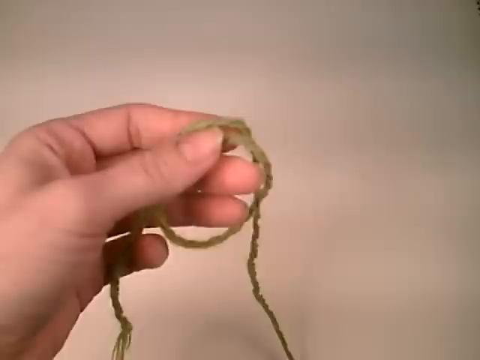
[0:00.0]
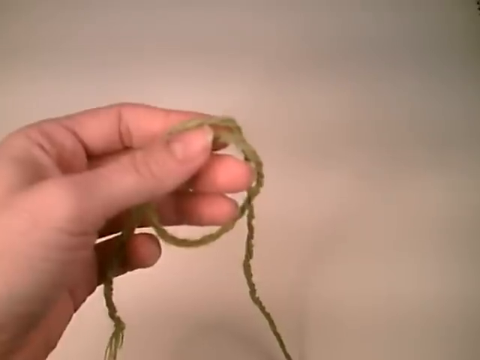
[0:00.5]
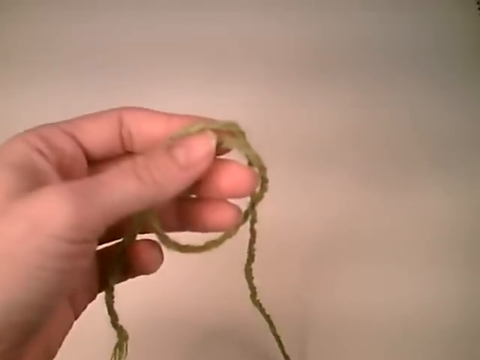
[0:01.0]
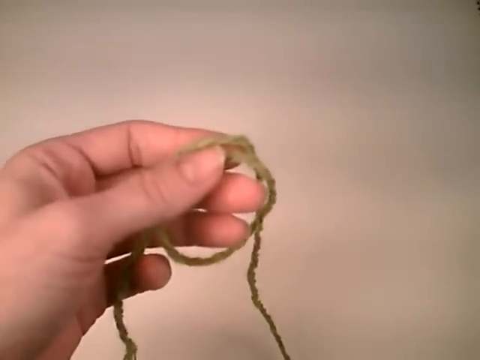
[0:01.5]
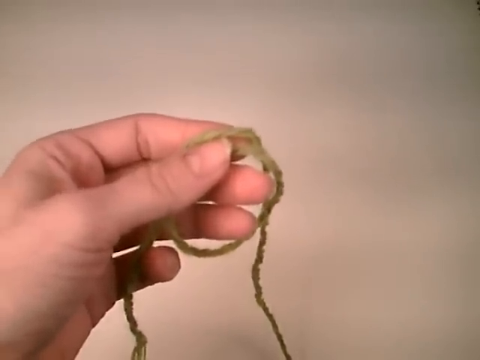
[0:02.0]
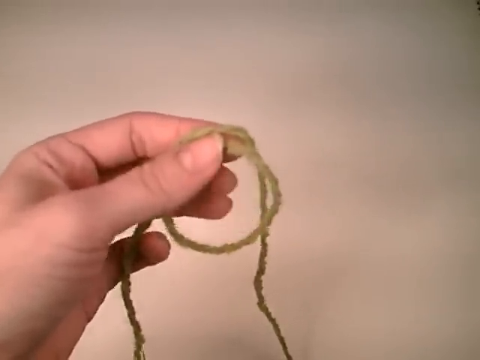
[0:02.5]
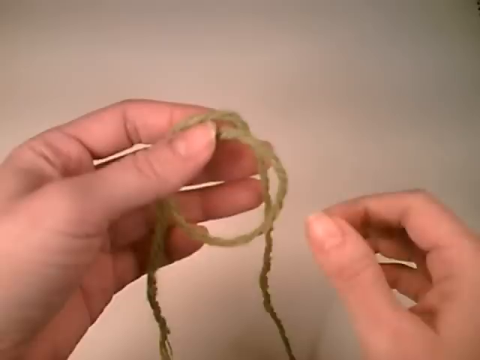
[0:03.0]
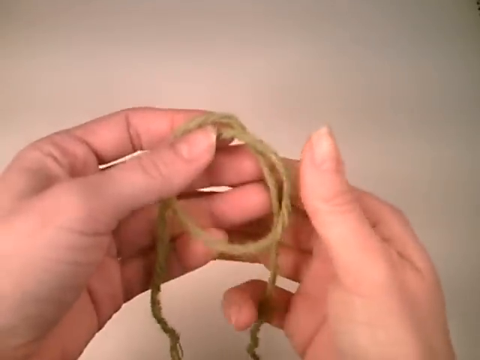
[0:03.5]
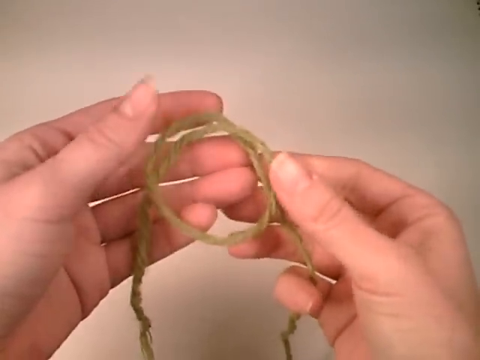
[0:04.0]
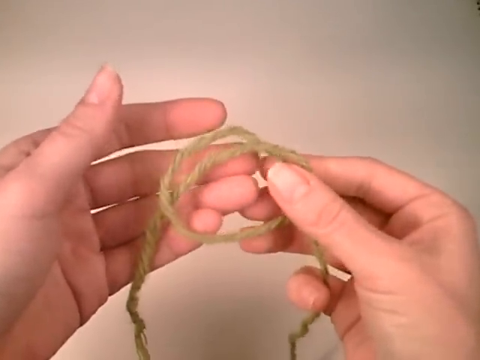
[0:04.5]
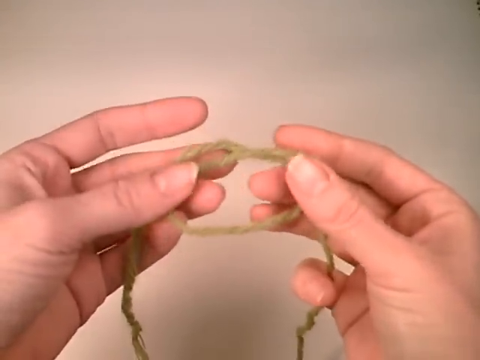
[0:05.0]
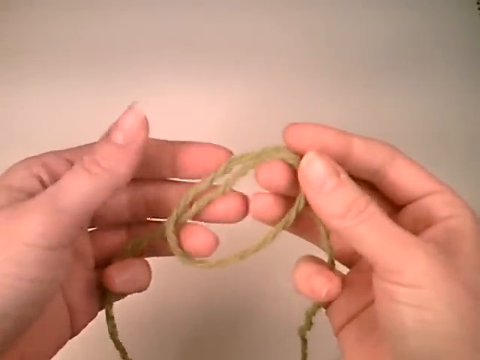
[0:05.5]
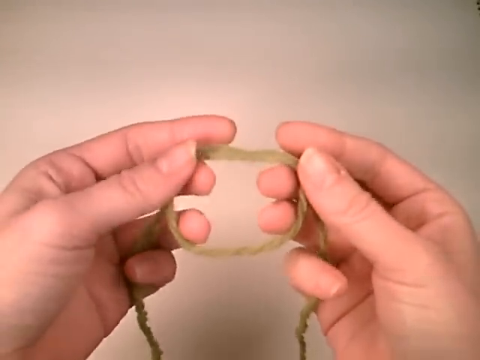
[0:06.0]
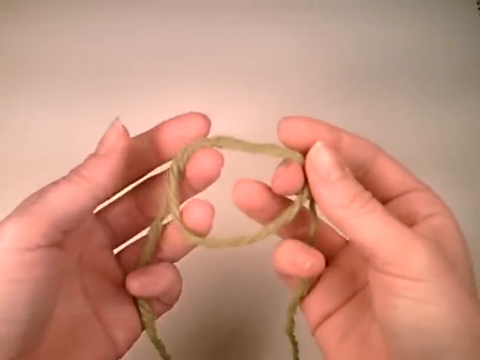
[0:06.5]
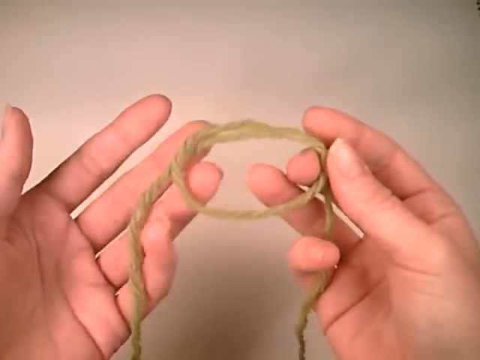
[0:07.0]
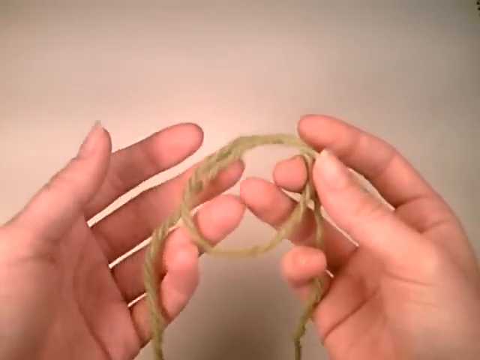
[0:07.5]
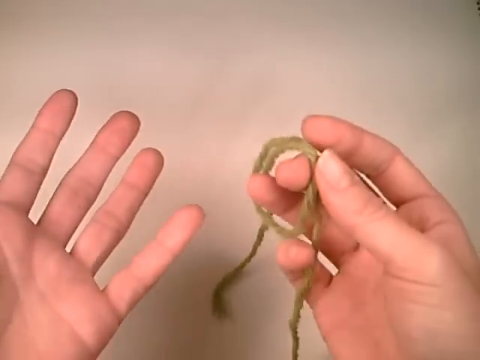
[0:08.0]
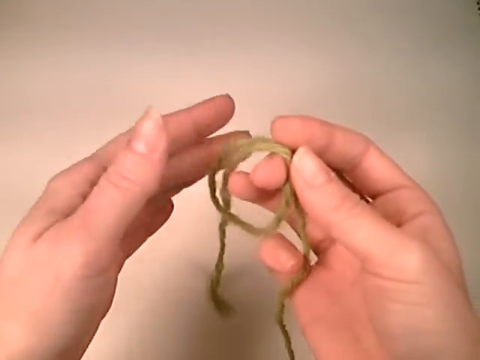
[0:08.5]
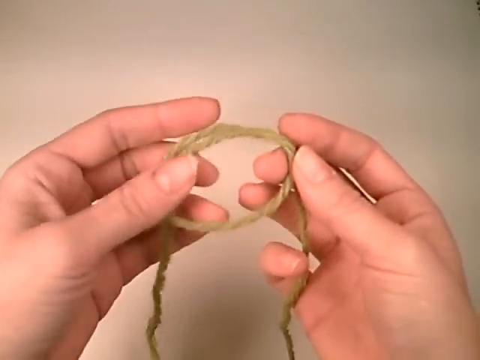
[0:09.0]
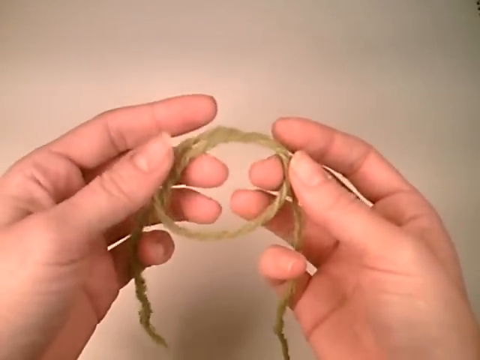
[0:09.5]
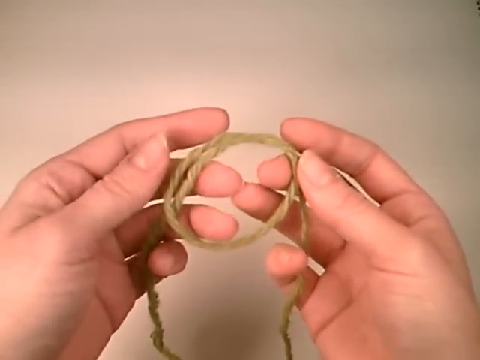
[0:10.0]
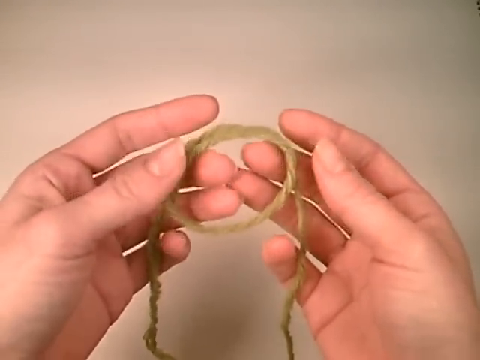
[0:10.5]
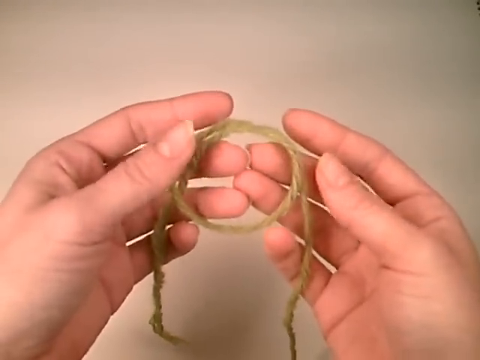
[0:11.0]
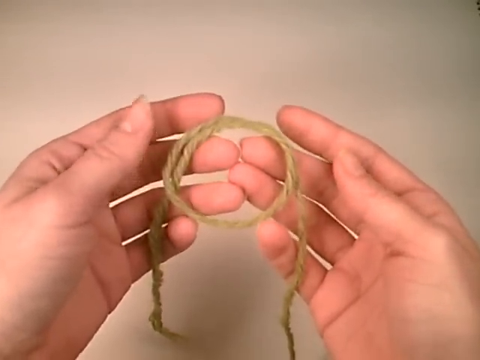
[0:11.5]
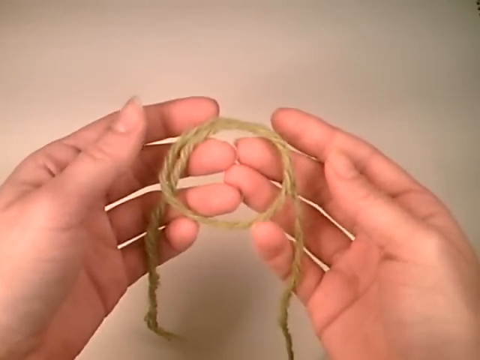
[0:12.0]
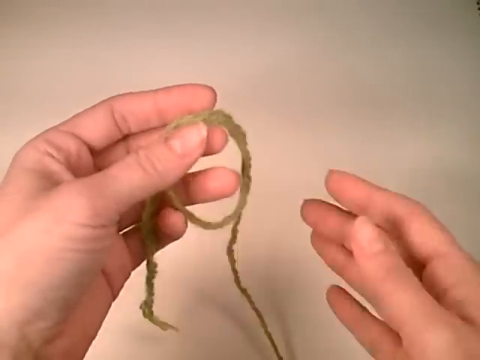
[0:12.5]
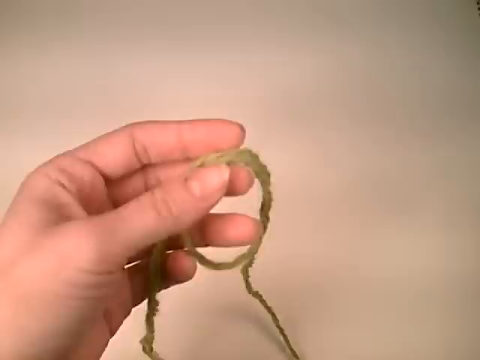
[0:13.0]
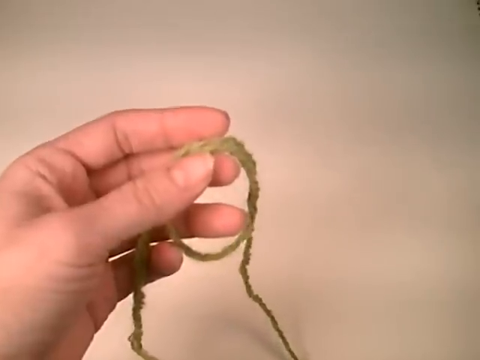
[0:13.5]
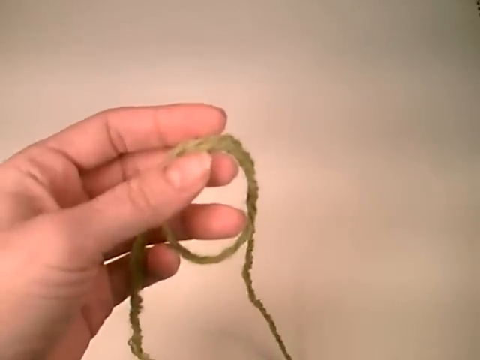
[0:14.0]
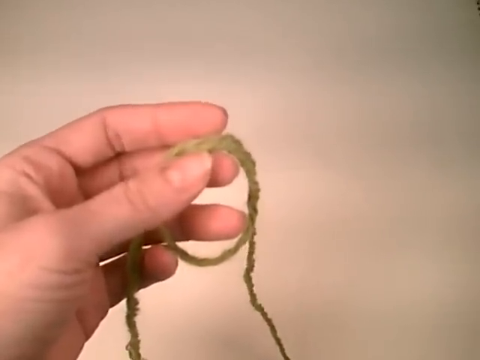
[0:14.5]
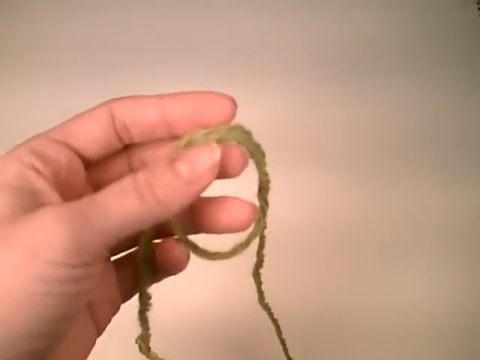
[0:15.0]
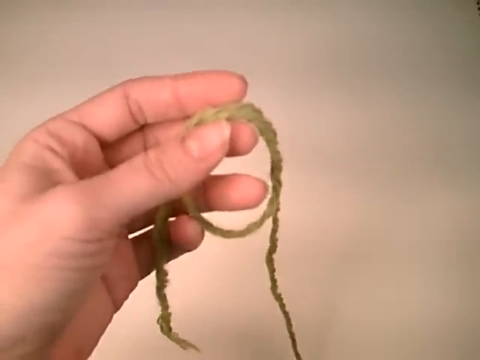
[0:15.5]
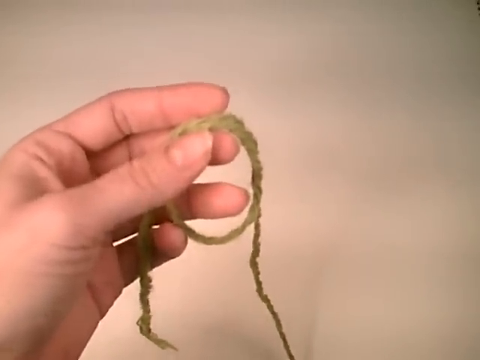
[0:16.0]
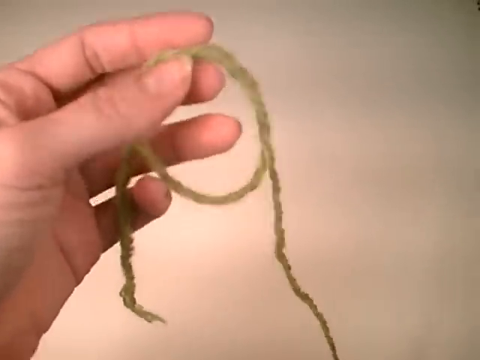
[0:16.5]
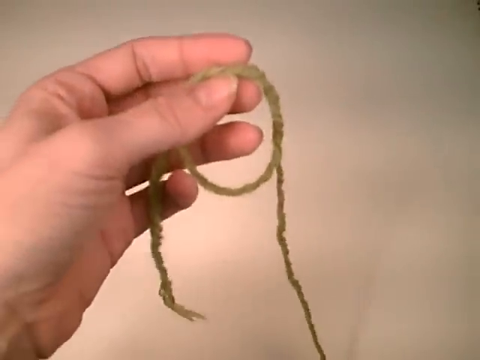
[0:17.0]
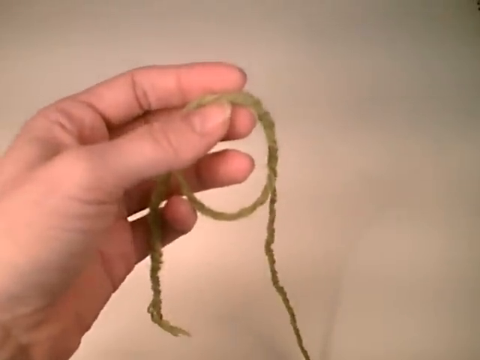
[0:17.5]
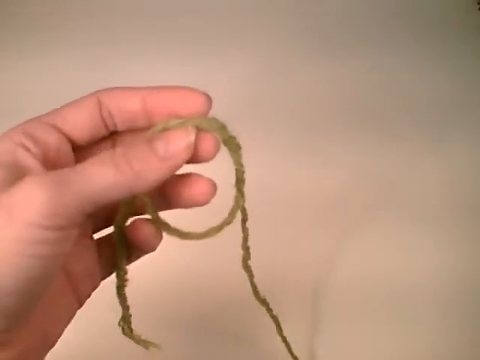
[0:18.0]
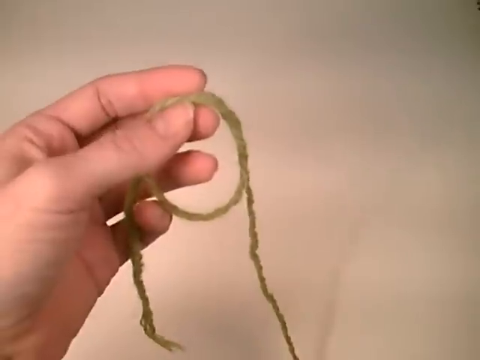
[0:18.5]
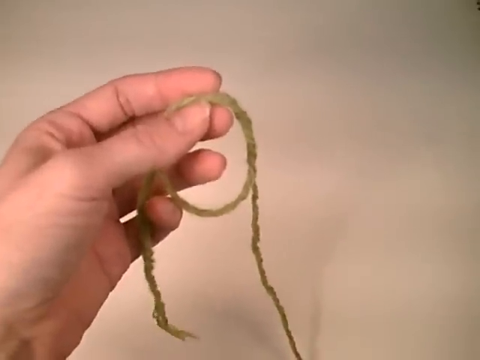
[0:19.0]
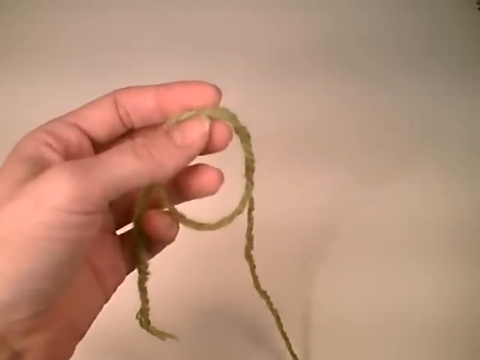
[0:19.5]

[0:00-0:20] A left hand appears at the left side of the screen, holding a piece of thread against a brownish background. The right hand later also appears, and the two hands fiddle with the thread, which has been tied in a circular knot. The right hand then disappears from the screen while the left hand keeps holding the thread. The individual has a bit of nail on the thumbs, and they appear white; the person is possibly a woman. There is no text on the video. The woman seems to be explaining how to tie a knot. The thread appears to have been intertwined with the circle a number of times, as part of the circular knot looks doubled while the other part is single. Two strands of thread extend from the knot.